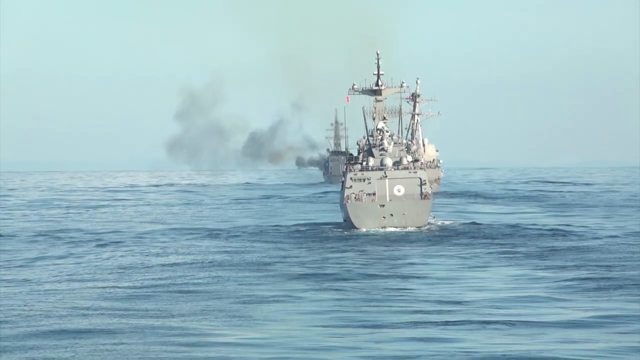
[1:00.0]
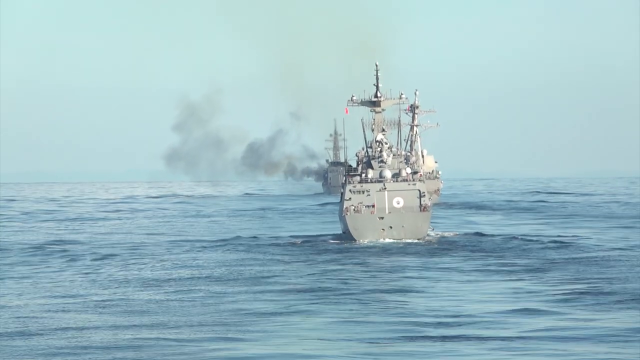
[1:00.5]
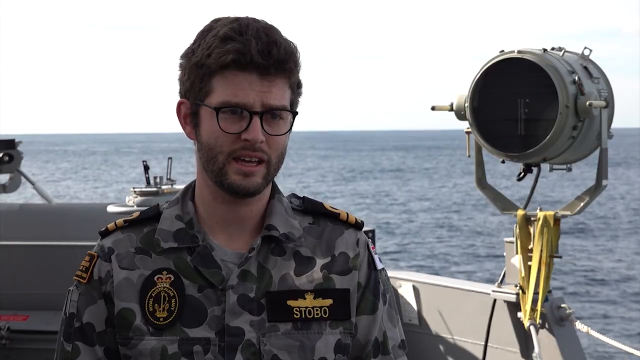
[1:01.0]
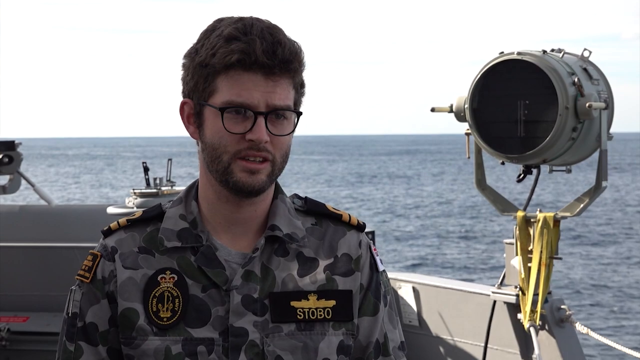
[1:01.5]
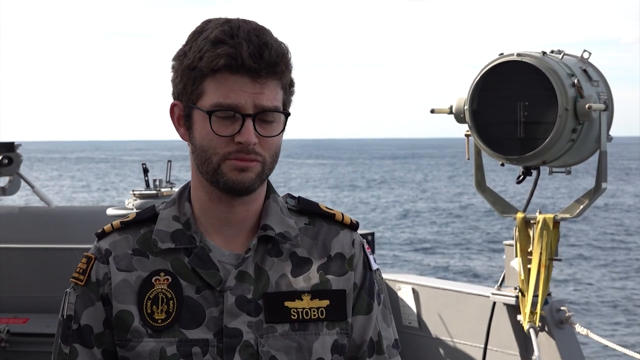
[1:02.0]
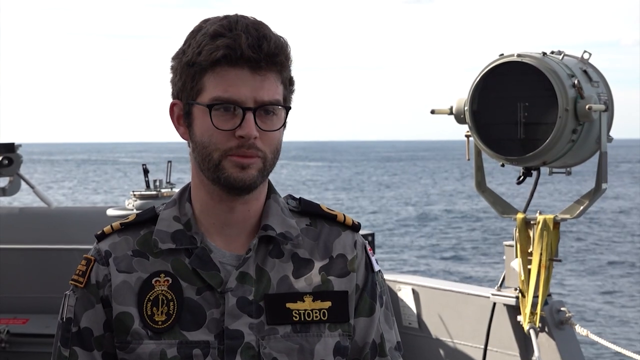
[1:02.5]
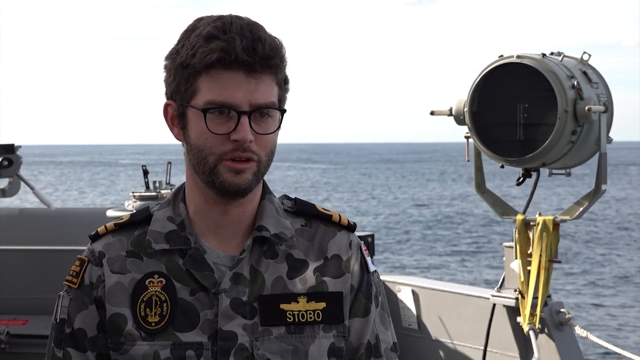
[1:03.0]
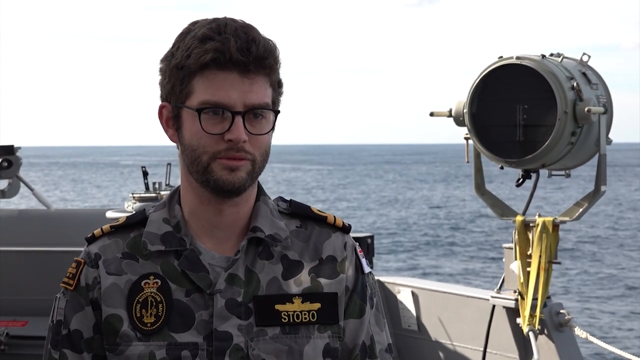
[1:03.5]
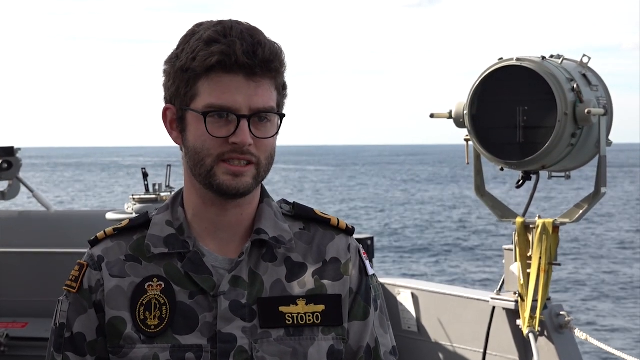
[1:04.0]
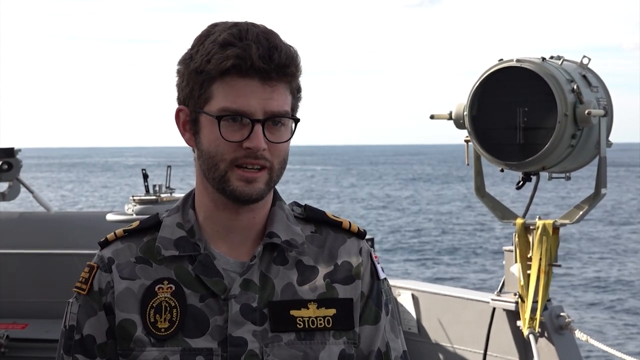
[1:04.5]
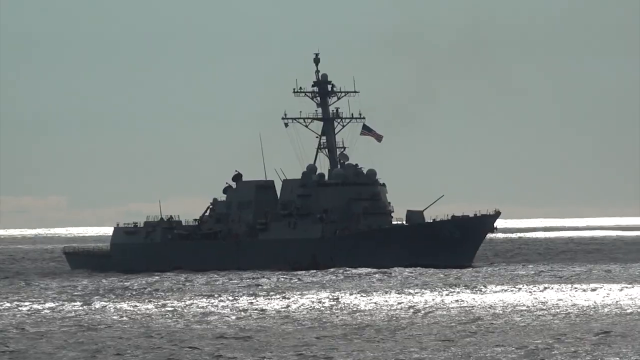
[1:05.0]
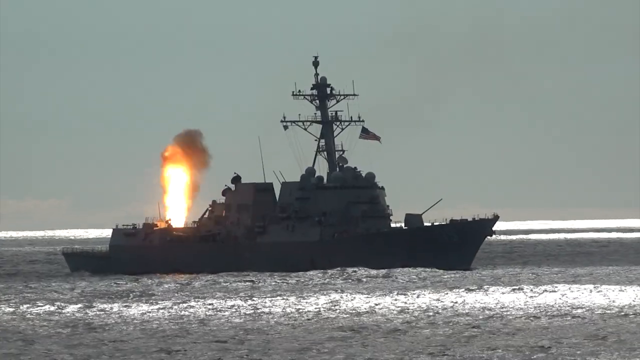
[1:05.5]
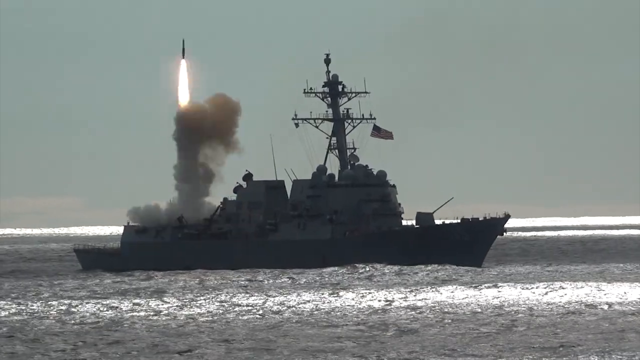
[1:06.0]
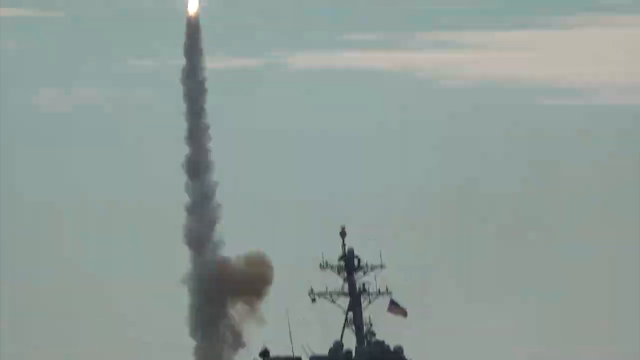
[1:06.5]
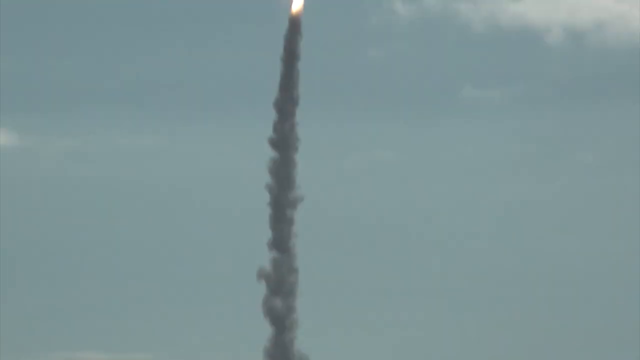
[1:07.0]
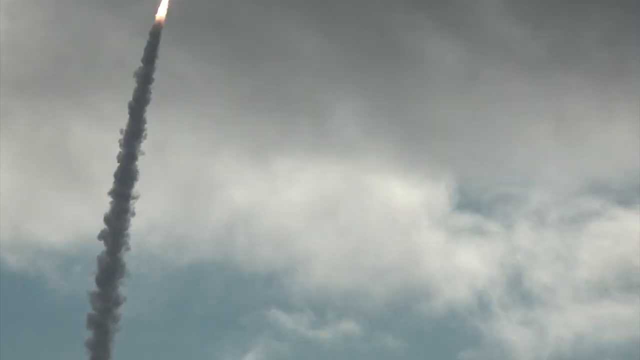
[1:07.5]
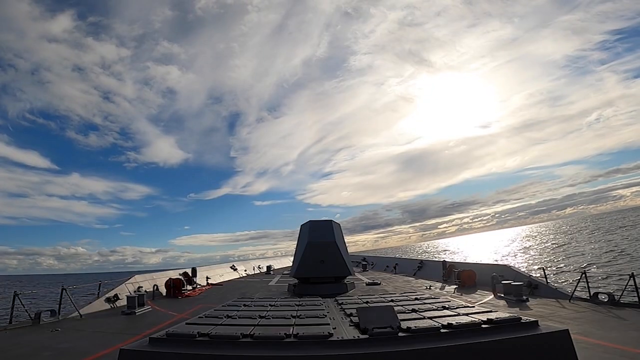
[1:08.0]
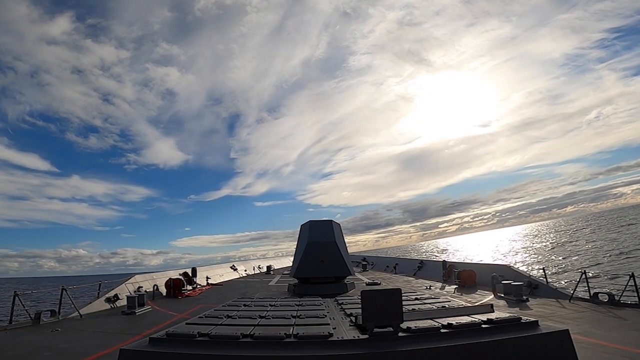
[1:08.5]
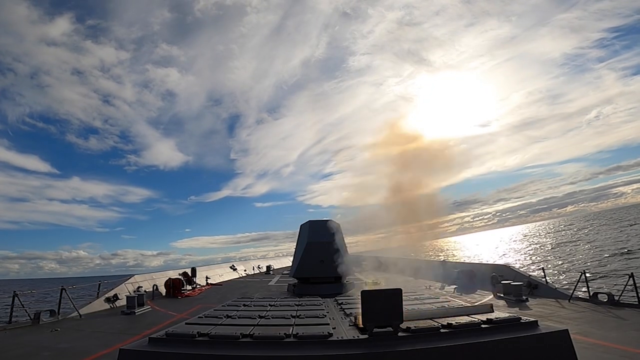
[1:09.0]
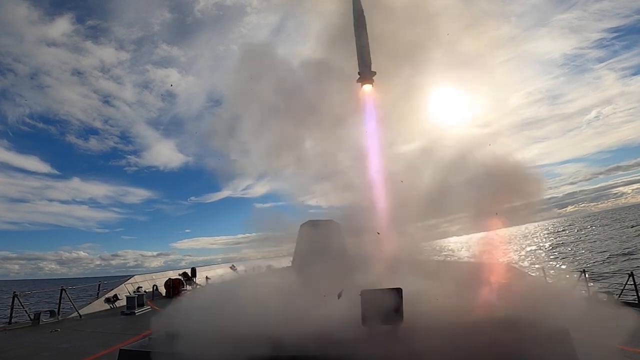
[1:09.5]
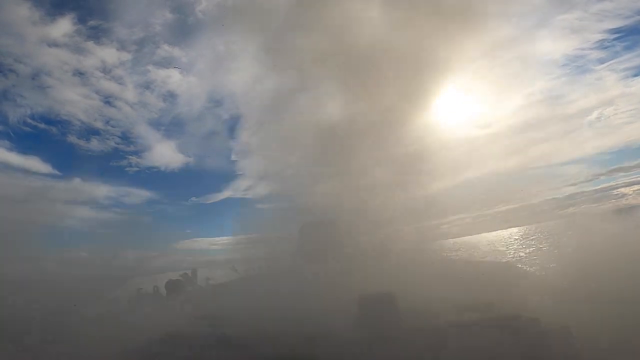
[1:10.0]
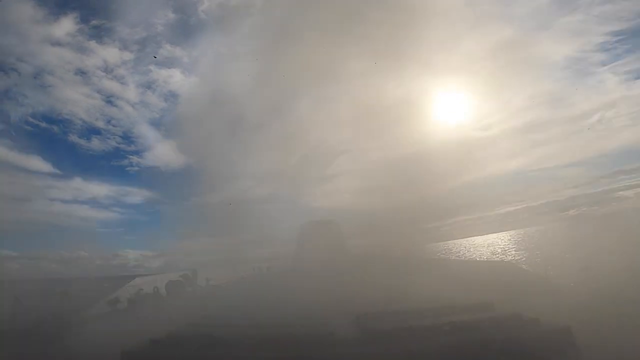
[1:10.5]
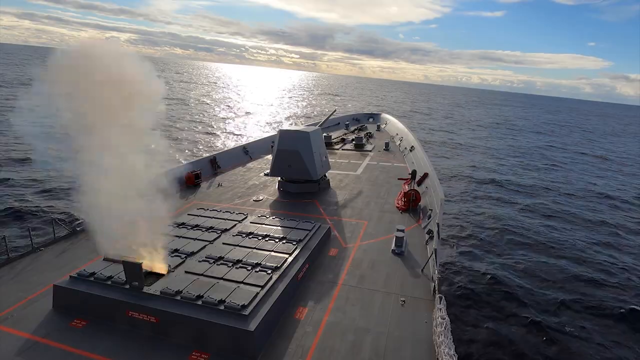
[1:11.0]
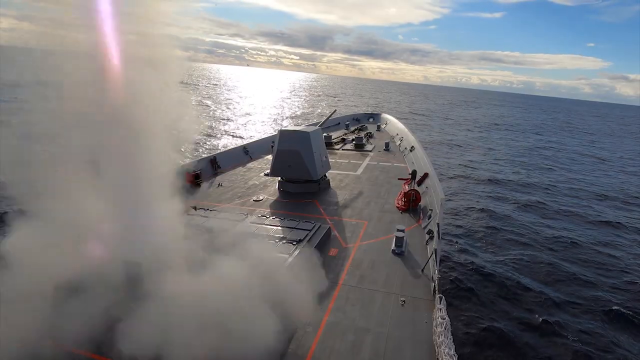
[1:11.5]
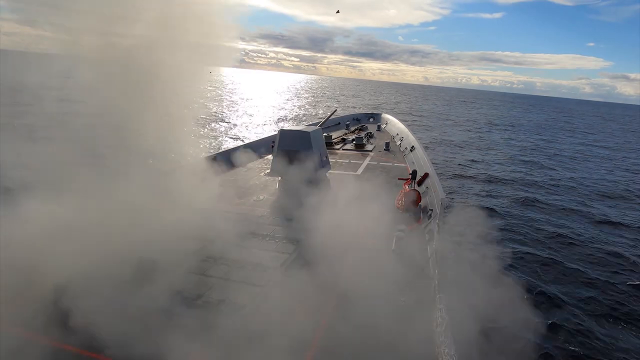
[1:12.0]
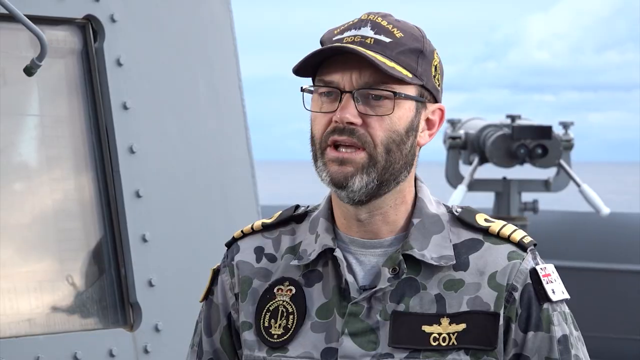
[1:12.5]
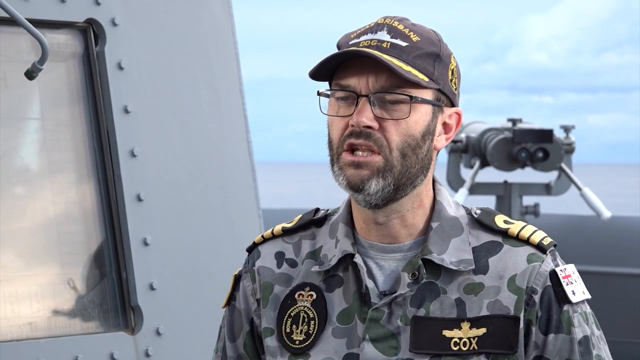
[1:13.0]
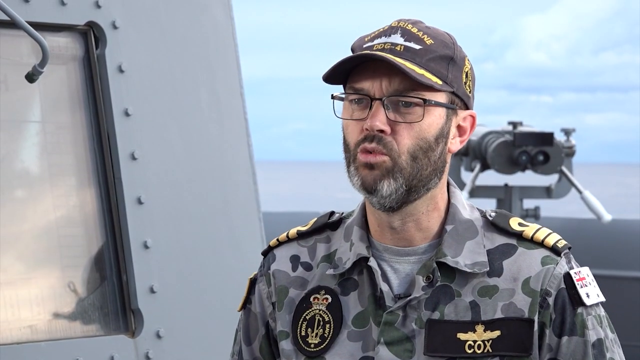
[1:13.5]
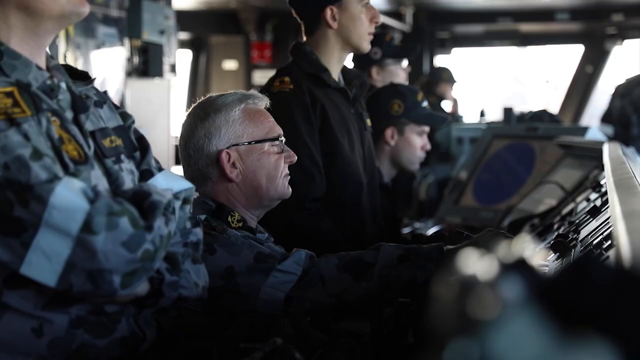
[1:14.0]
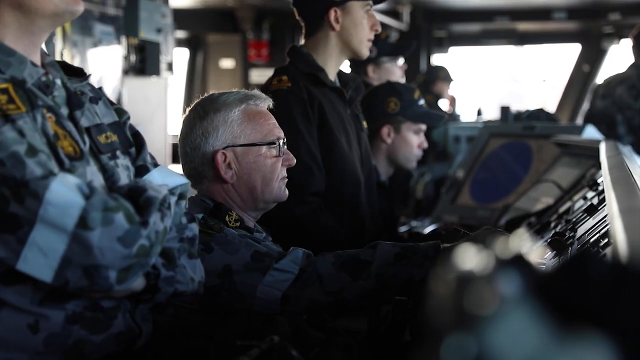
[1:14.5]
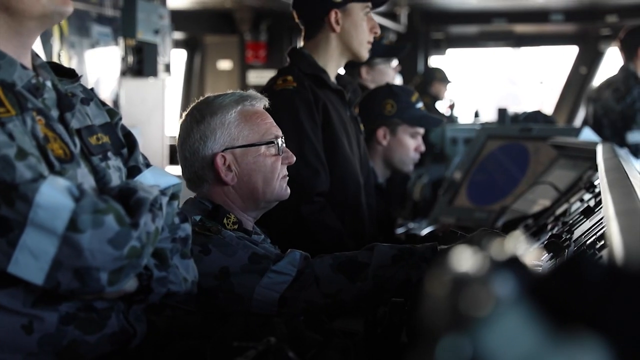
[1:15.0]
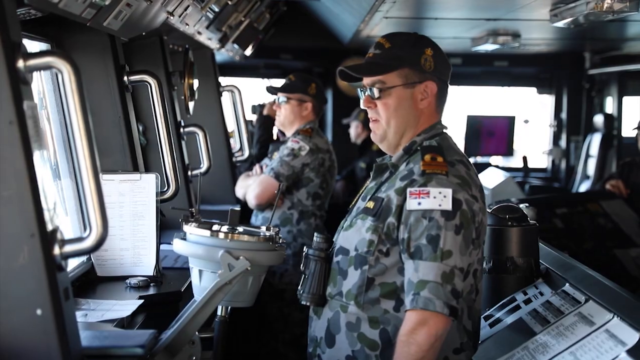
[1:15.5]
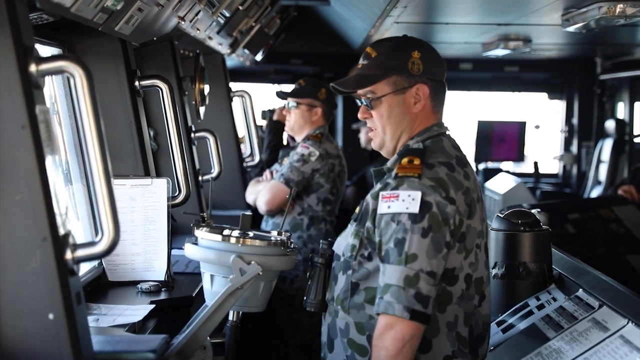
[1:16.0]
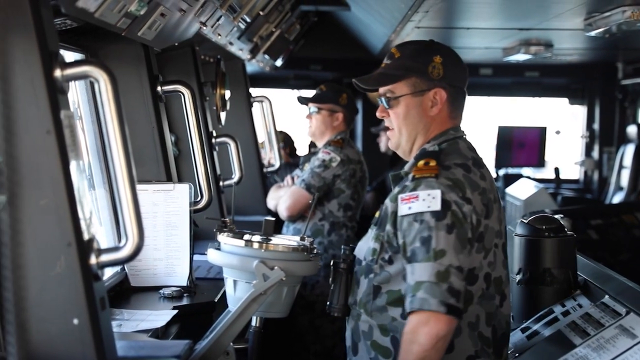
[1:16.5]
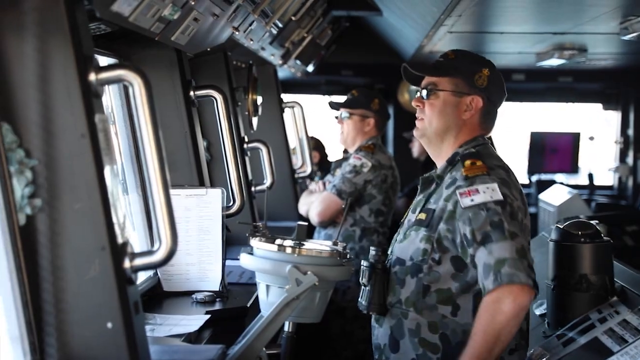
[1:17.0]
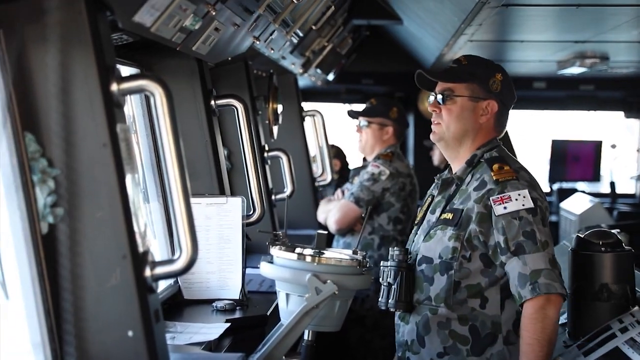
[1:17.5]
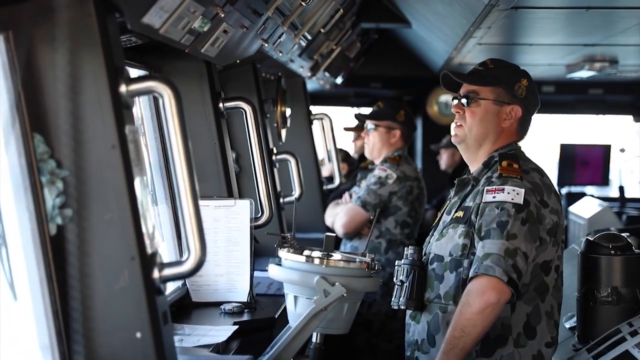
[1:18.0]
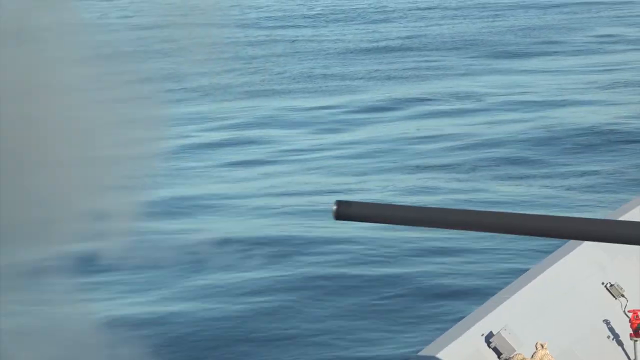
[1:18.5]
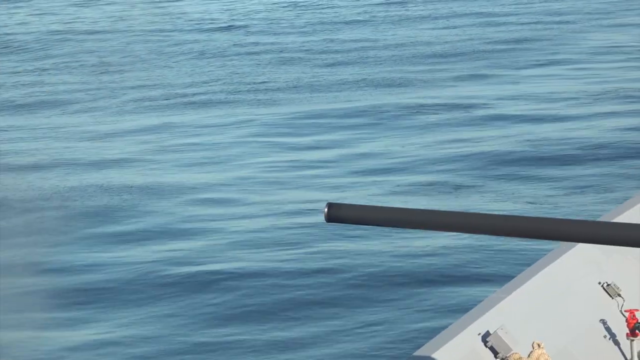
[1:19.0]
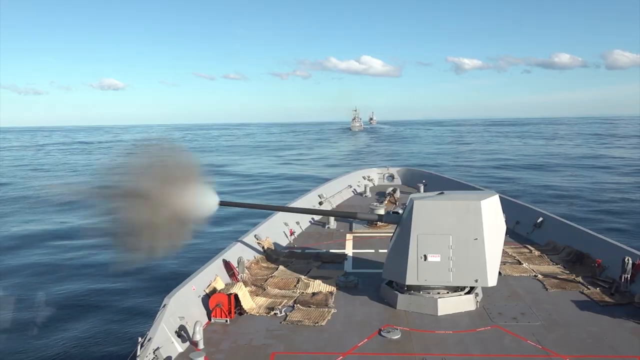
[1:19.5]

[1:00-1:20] Several ships are on the sea; the one in the far distance appears to have fired a cannon, as there is smoke coming from its side. A white man who looks to be in his late 20s or 30s, wearing glasses, with the name Stobo on the front of his uniform, stands next to a searchlight talking directly to the camera. Next is a side view of a ship sailing on the sea that appears quite in shadow; a missile fires from it, with bright orange flame going up and black smoke, and the camera follows the missile upwards, showing the black/grey plume of smoke. At the bow of a ship, a hatch opens and a missile fires up into the sky, seen at eye level, and smoke fills the screen; the same missile is seen from another angle as it fires up, and smoke fills the screen once again. Another man in a uniform, with Cox on the front of it, apparently his surname, talks to the screen. Inside a ship, all the navigation systems are visible with several men at the front of them. A few other men with binoculars and sunglasses look out of the window of the ship. Outside, the very end of a cannon fires off, with smoke and a shell fired from it, and the camera pans out to show more of the cannon as it shoots.